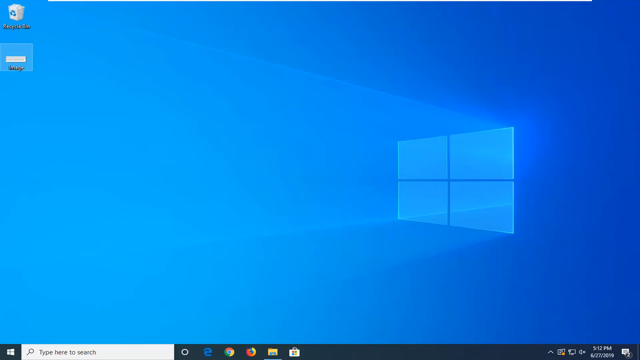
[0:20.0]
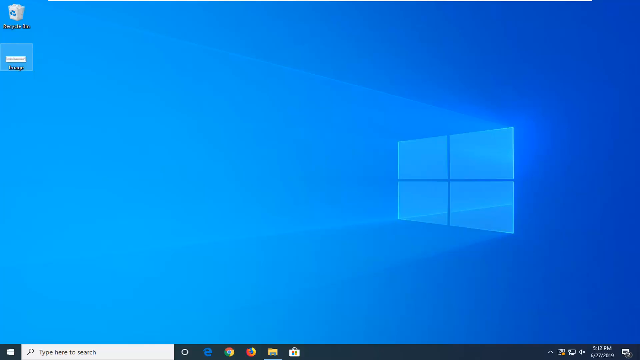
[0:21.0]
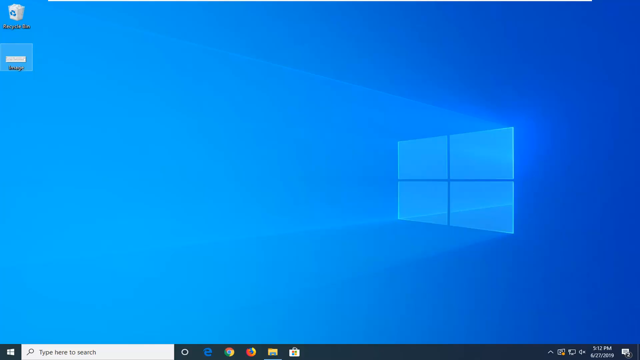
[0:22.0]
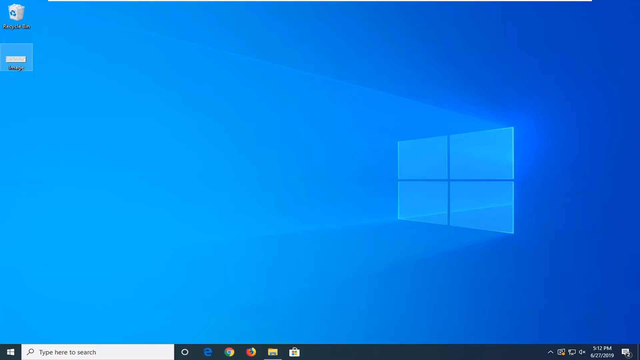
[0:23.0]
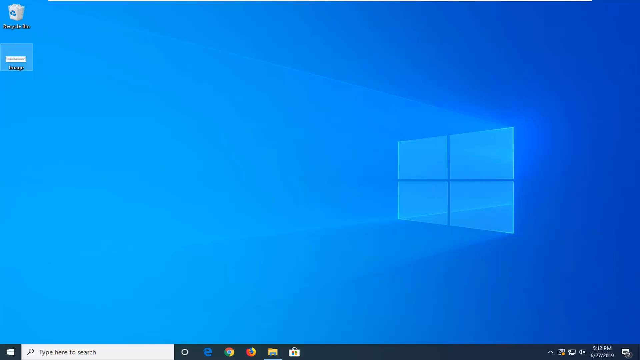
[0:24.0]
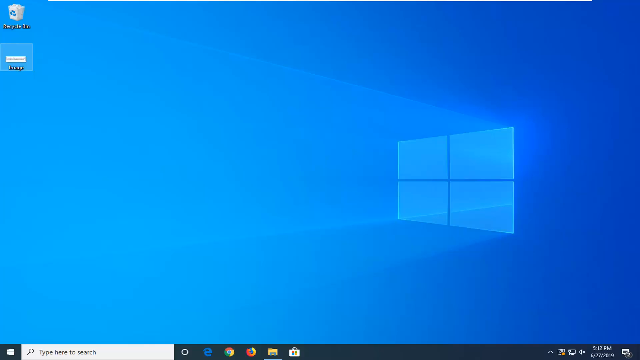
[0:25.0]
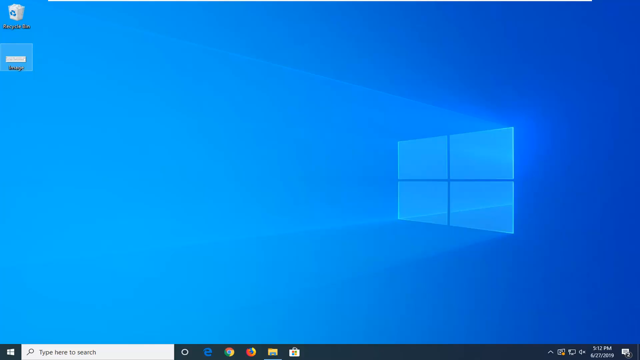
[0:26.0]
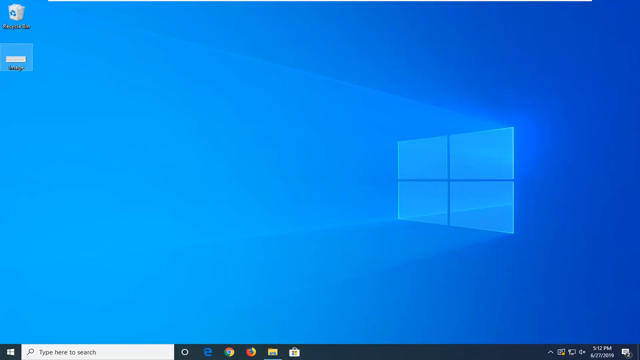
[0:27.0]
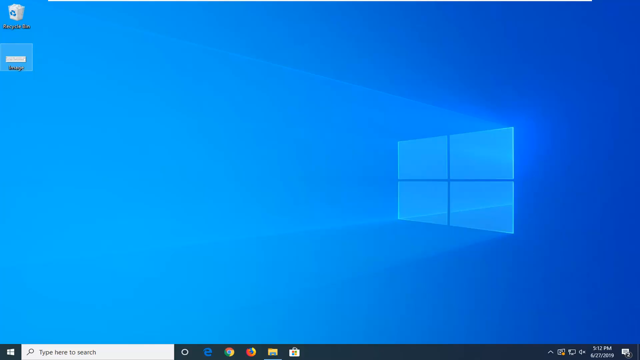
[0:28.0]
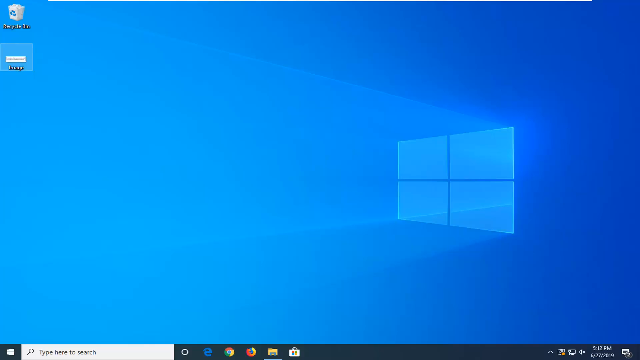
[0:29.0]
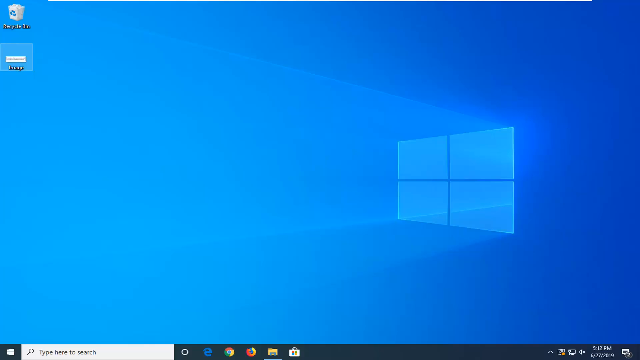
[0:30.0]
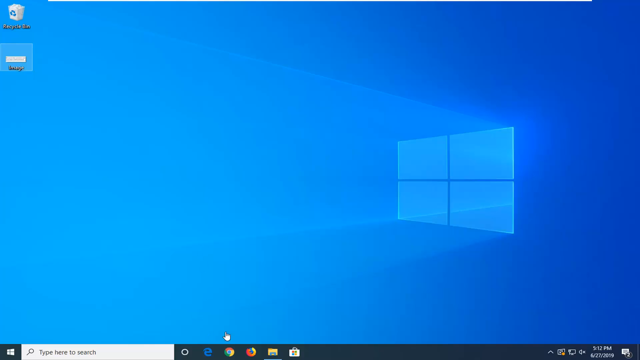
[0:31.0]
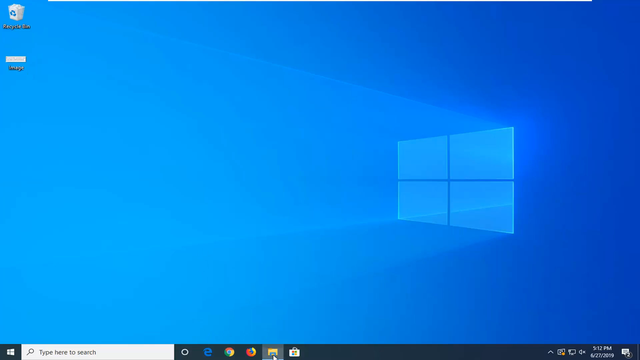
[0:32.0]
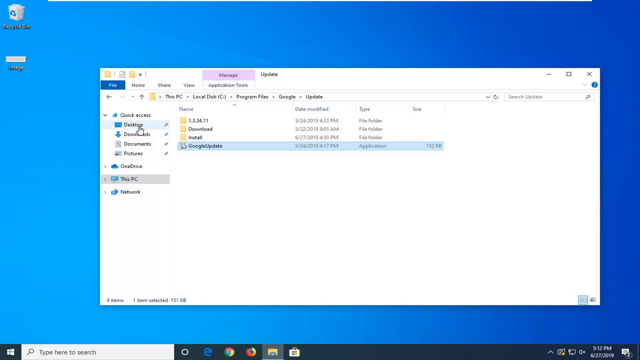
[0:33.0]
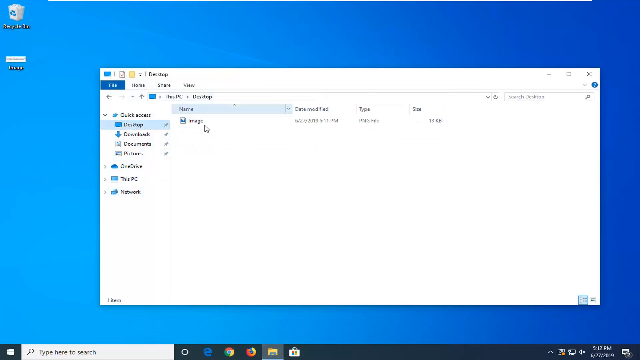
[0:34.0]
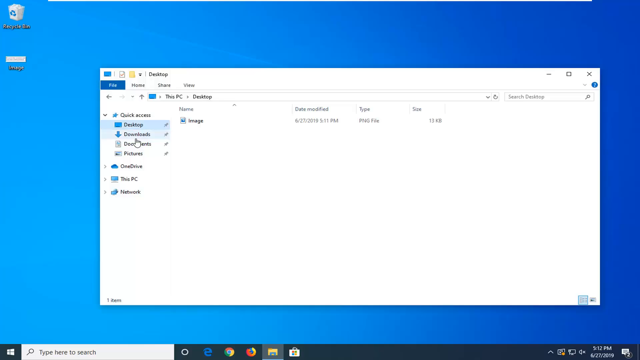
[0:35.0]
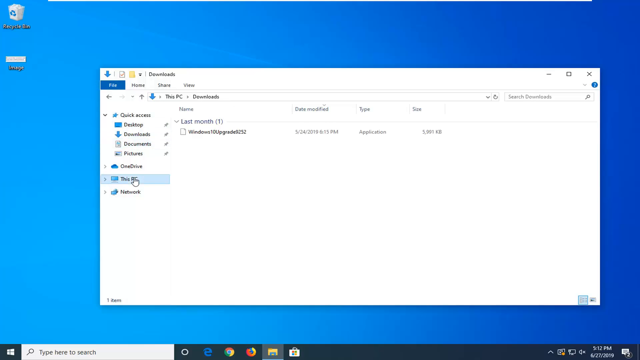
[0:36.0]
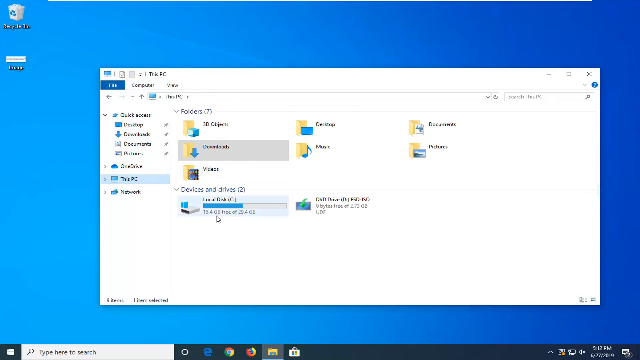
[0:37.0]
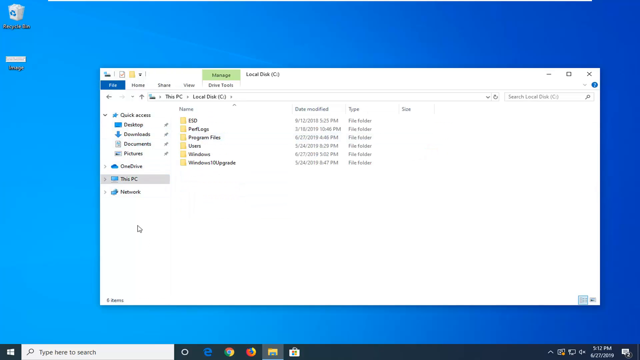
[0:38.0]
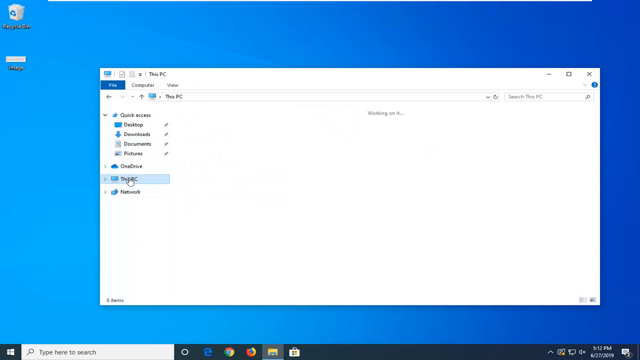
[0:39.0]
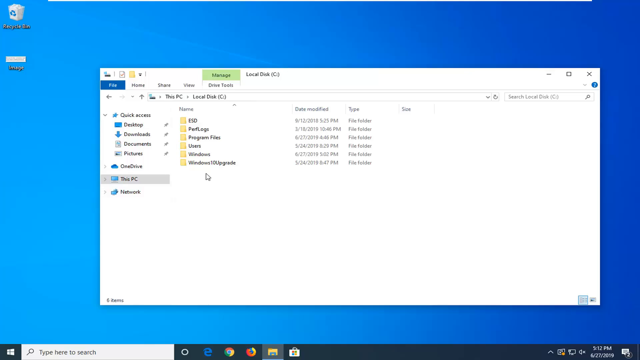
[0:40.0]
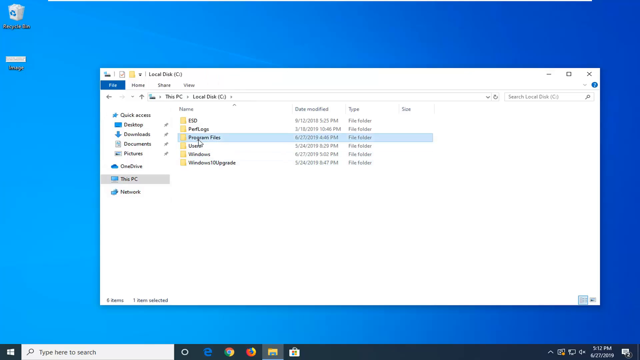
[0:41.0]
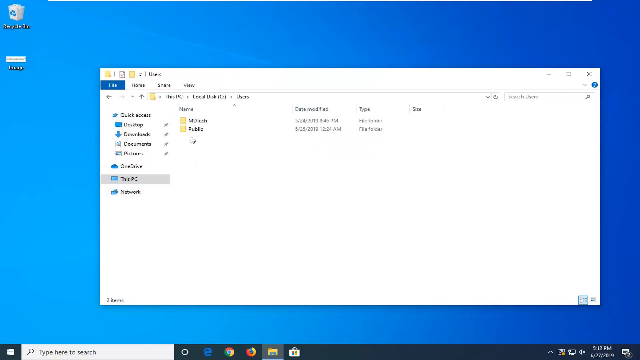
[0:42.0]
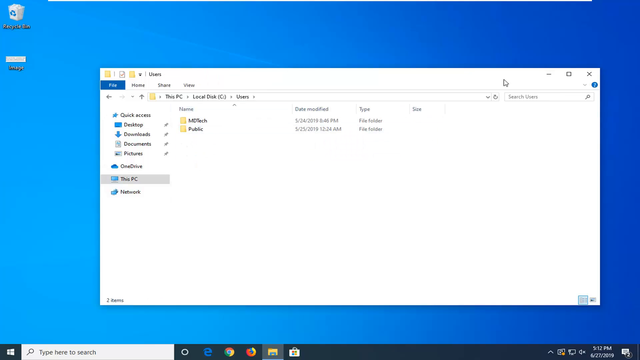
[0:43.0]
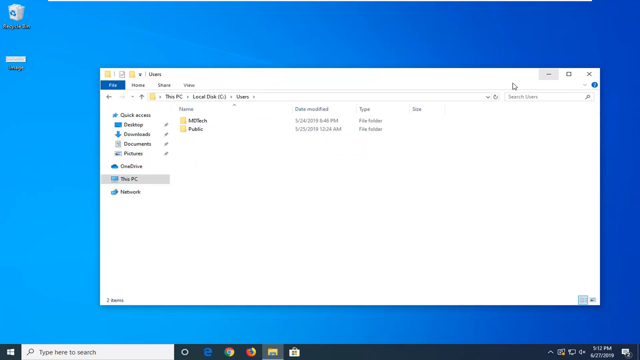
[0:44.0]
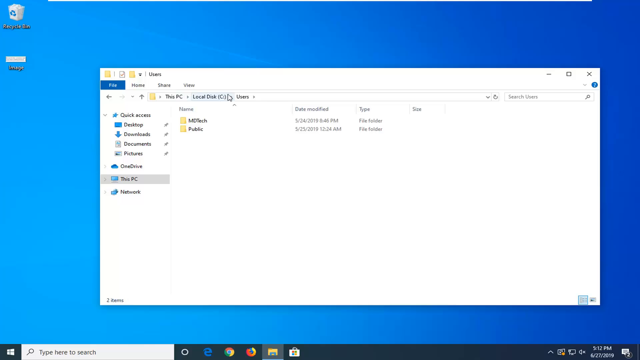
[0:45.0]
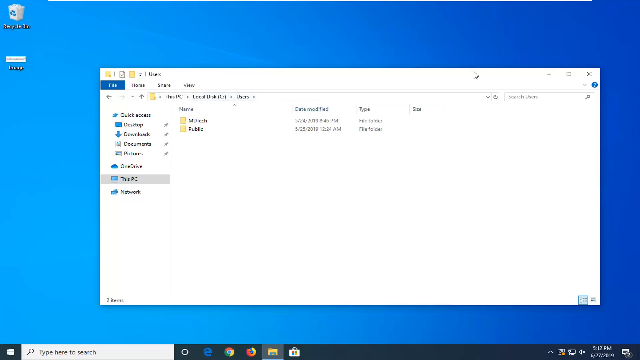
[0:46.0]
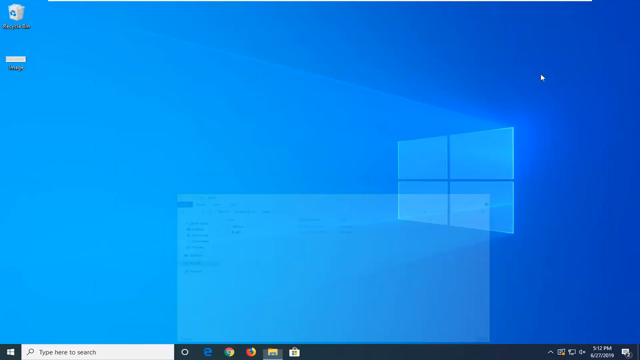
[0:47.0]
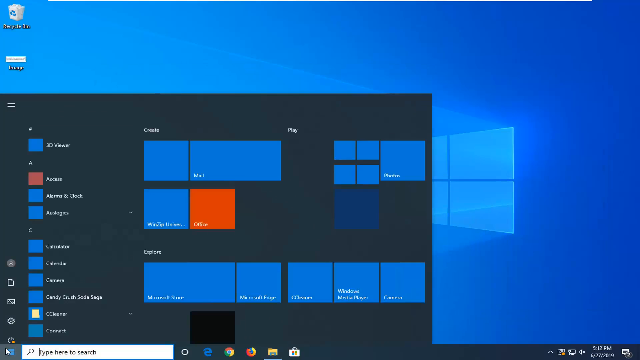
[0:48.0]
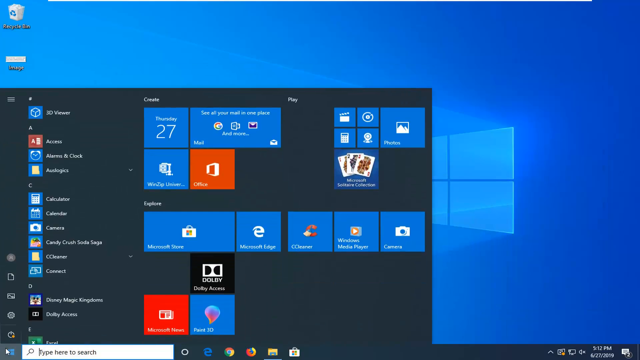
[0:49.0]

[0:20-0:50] A computer screen shows the Windows emblem, with a recycle bin in the upper right-hand corner. Someone opens a window at the Update folder, with the path going from This PC to Local Disk C to Program Files to Google to Update. The left column lists Quick Access, Desktop, Documents, Pictures, OneDrive, This PC, and Network. He goes to the desktop, where there is an image, then goes down to This PC, into the Local Disk C drive, and to Program Files and Users, so the path reads This PC, Local Disk C, Users. The view then goes back to the regular home screen.